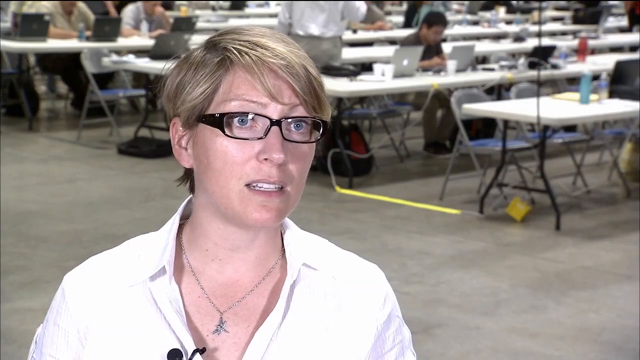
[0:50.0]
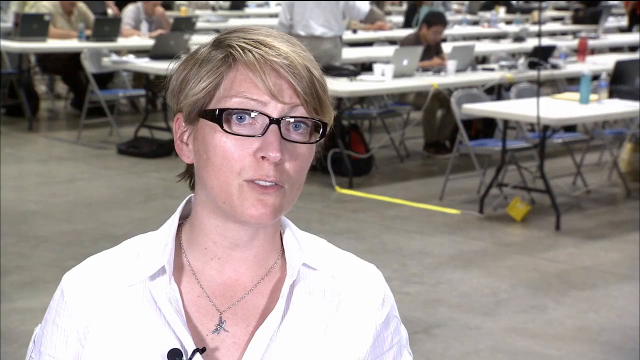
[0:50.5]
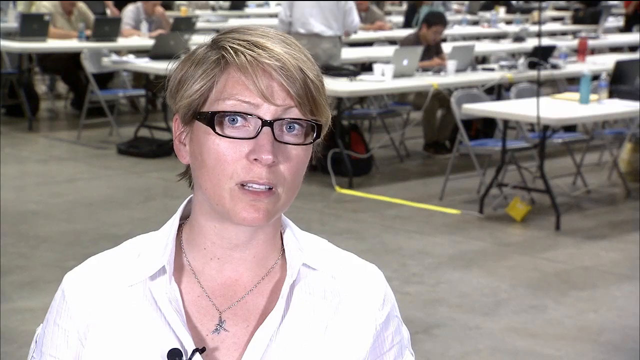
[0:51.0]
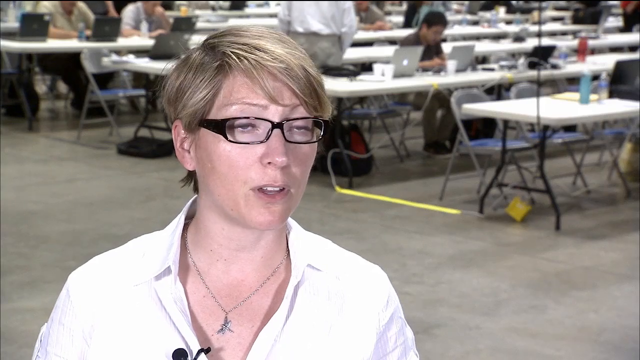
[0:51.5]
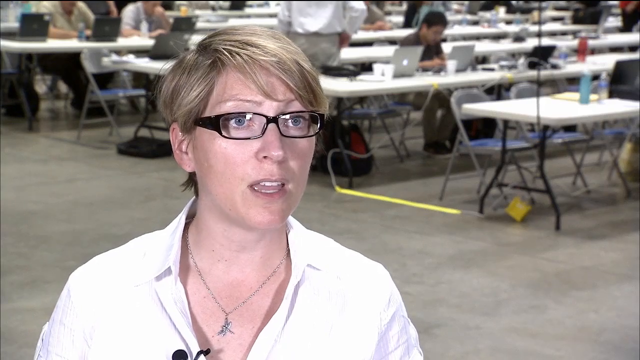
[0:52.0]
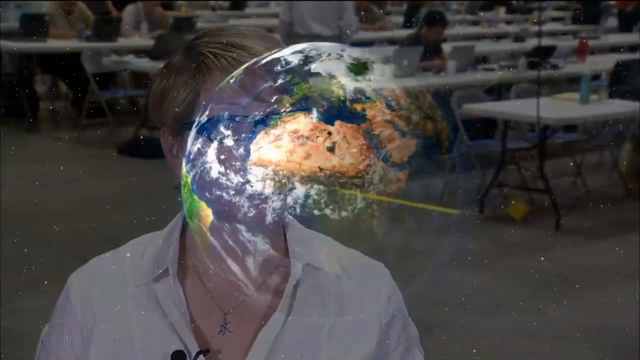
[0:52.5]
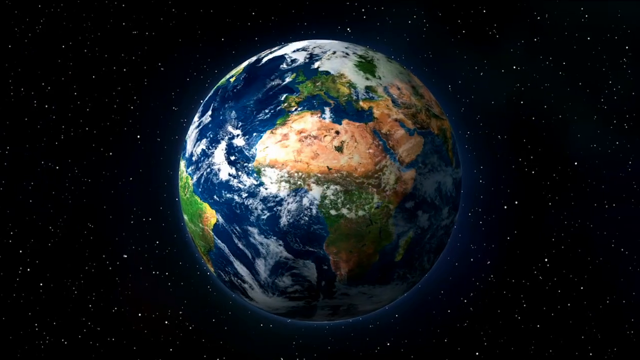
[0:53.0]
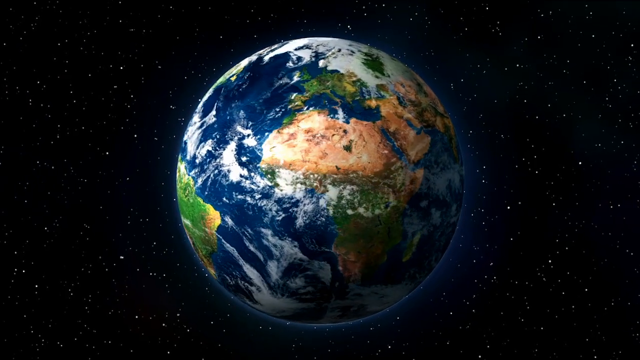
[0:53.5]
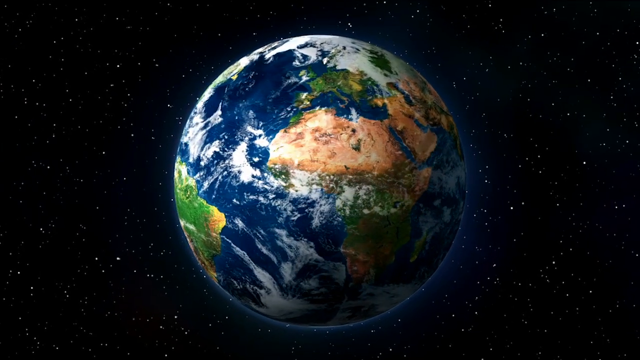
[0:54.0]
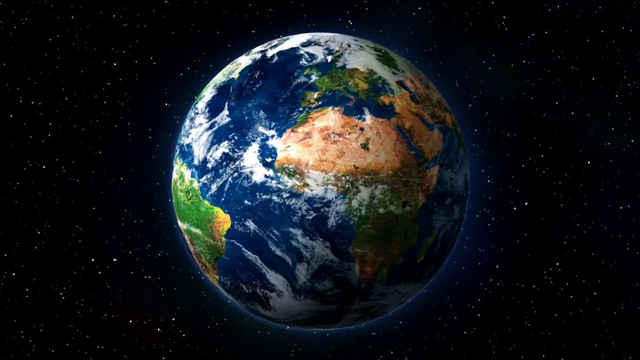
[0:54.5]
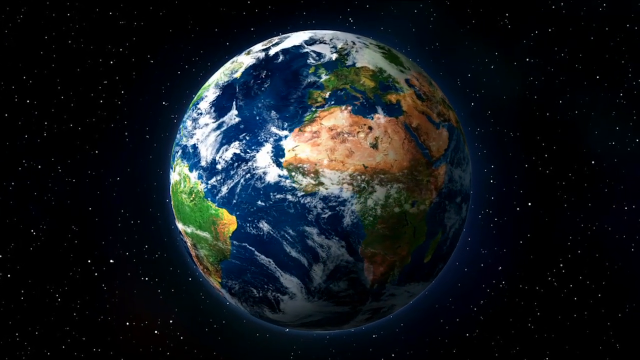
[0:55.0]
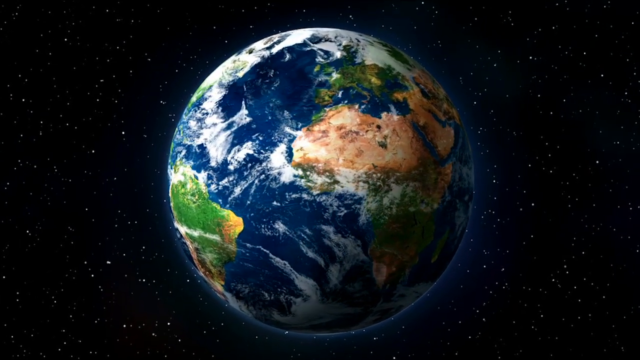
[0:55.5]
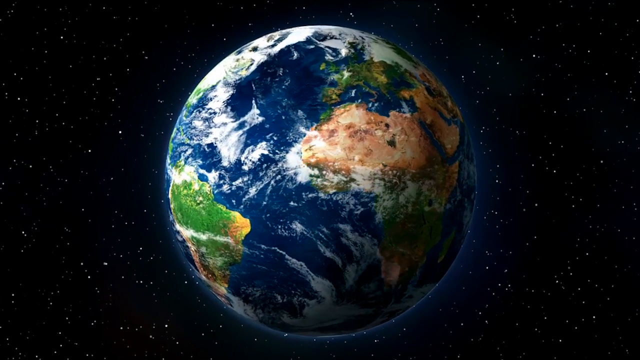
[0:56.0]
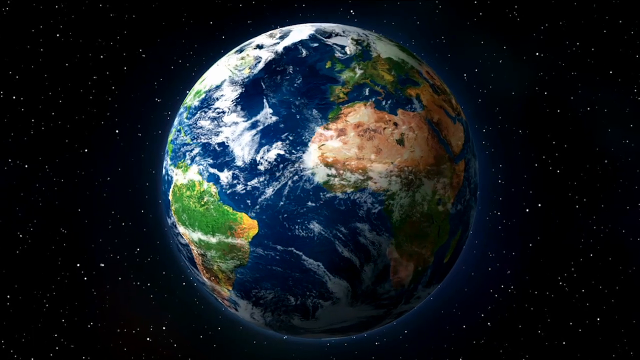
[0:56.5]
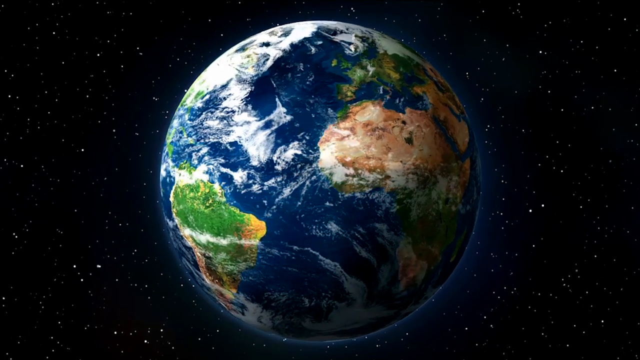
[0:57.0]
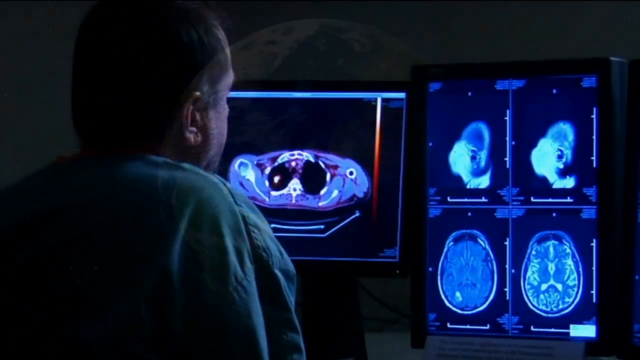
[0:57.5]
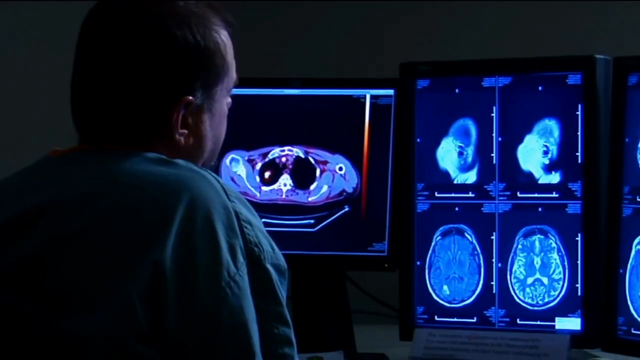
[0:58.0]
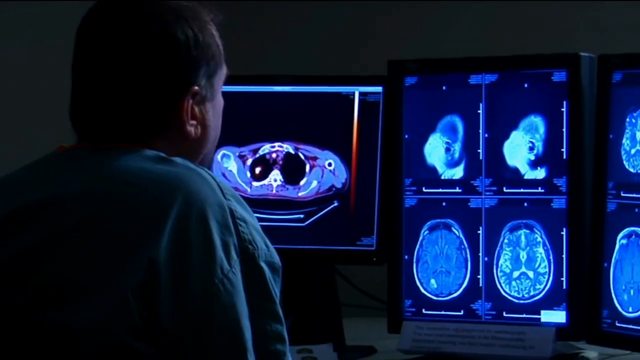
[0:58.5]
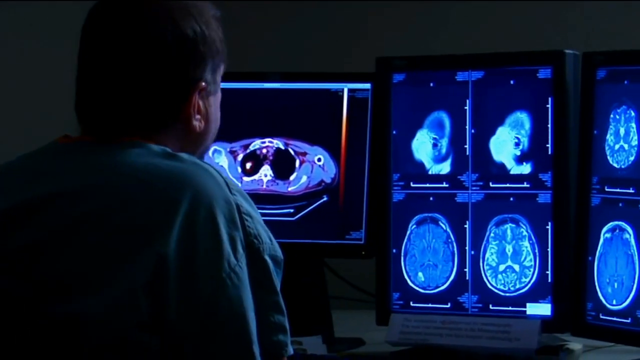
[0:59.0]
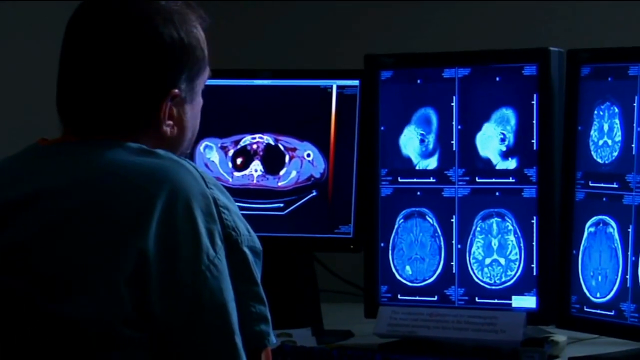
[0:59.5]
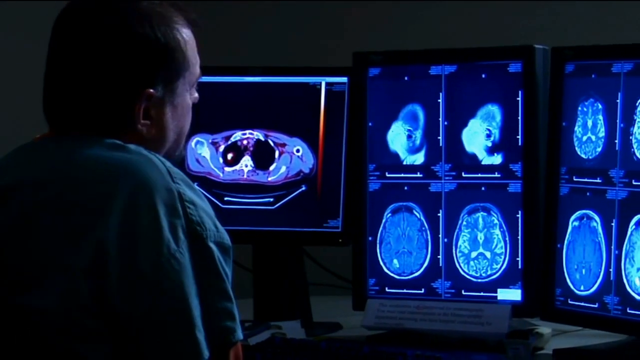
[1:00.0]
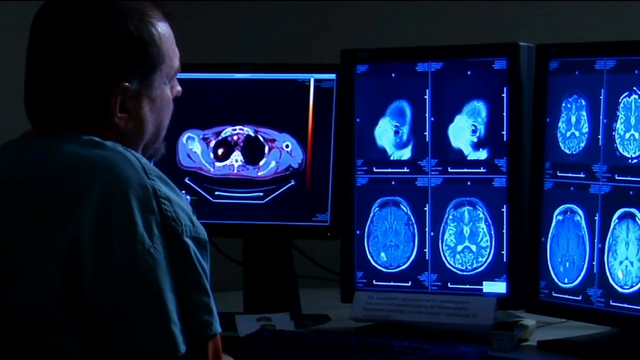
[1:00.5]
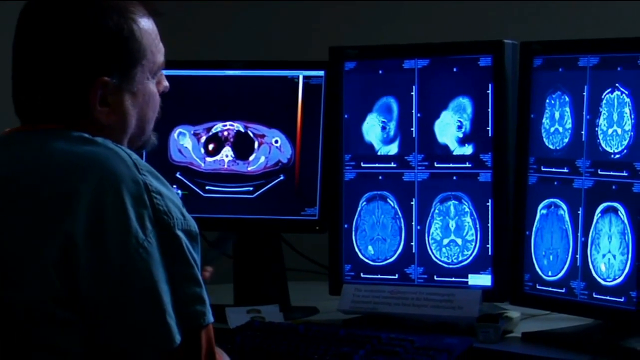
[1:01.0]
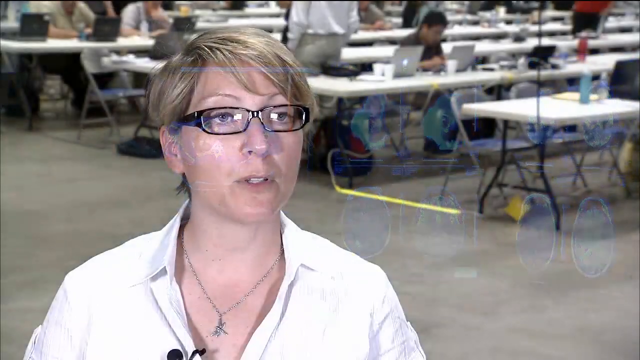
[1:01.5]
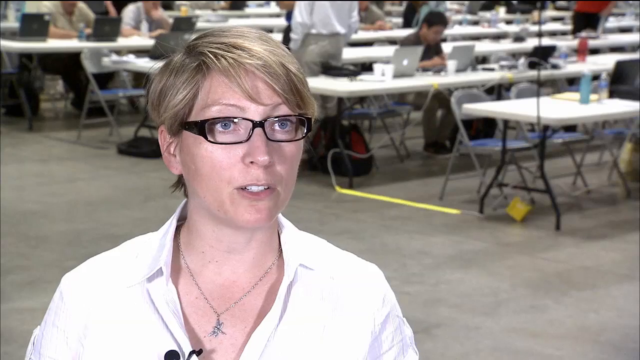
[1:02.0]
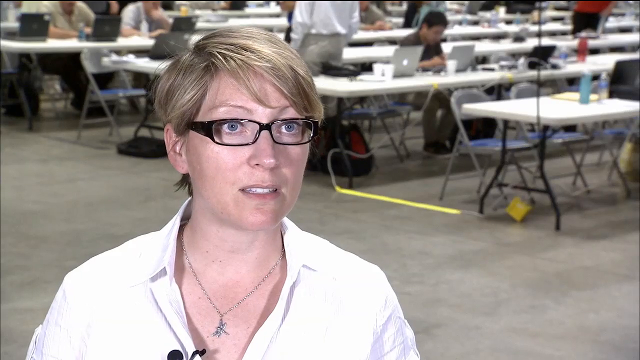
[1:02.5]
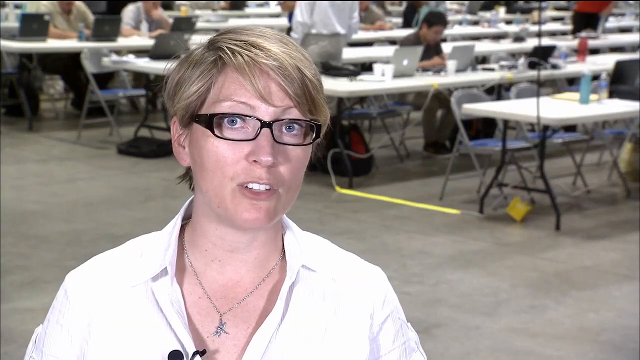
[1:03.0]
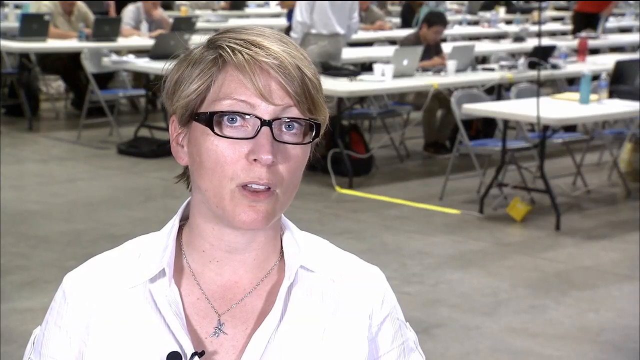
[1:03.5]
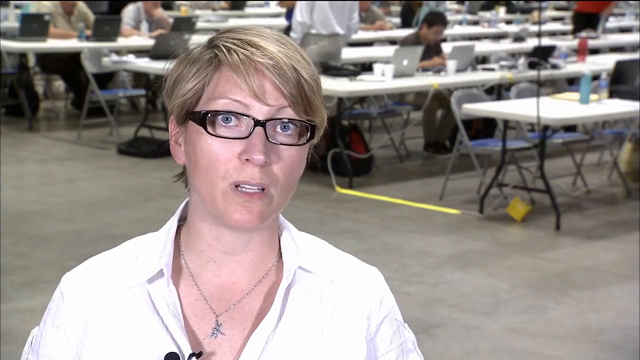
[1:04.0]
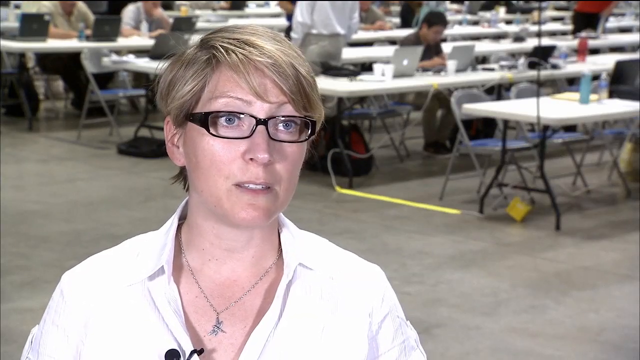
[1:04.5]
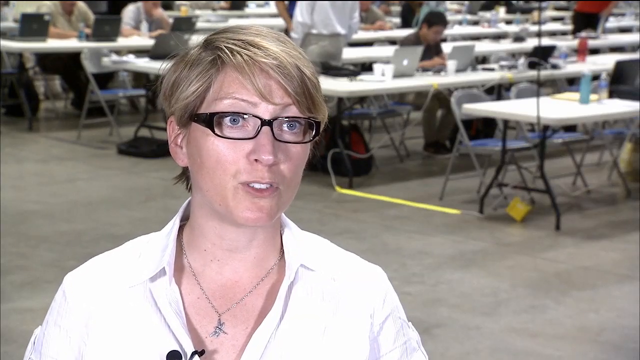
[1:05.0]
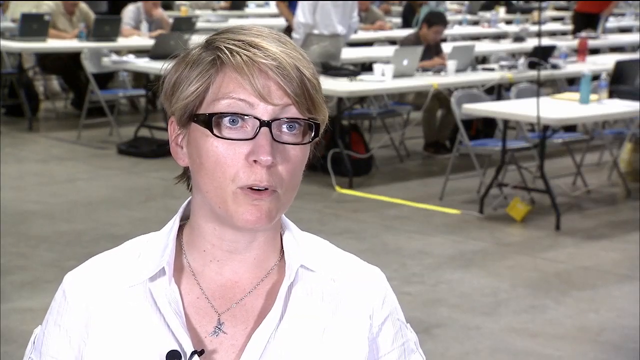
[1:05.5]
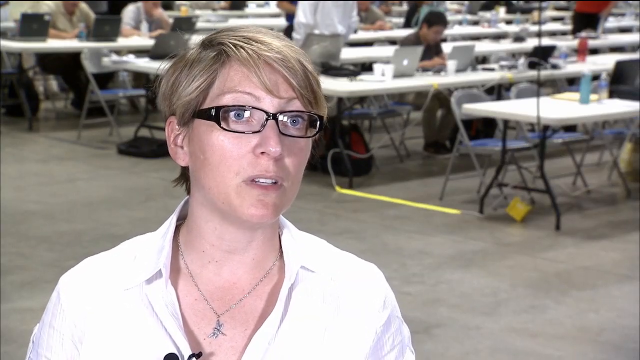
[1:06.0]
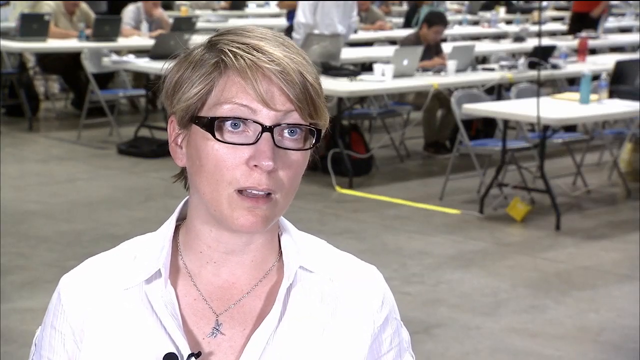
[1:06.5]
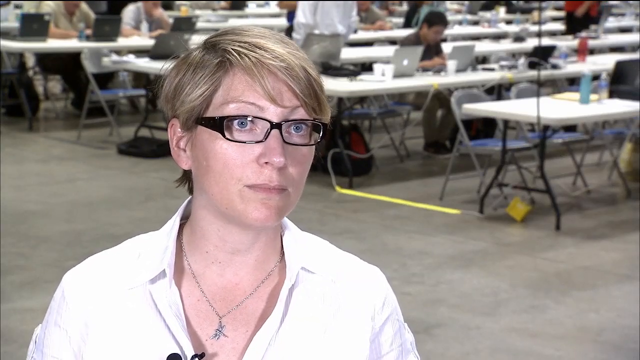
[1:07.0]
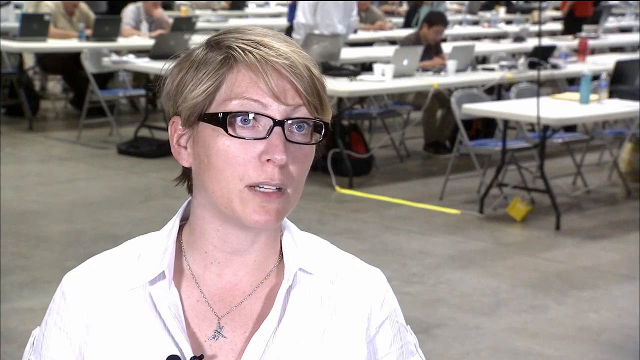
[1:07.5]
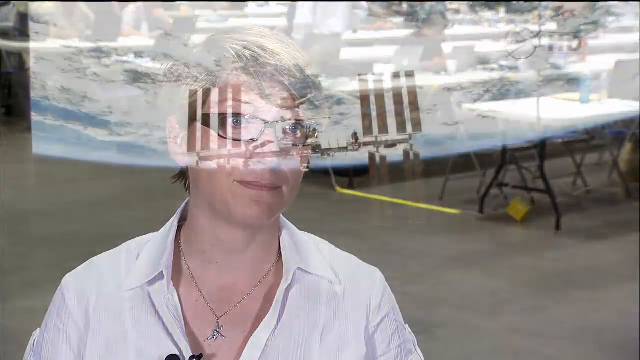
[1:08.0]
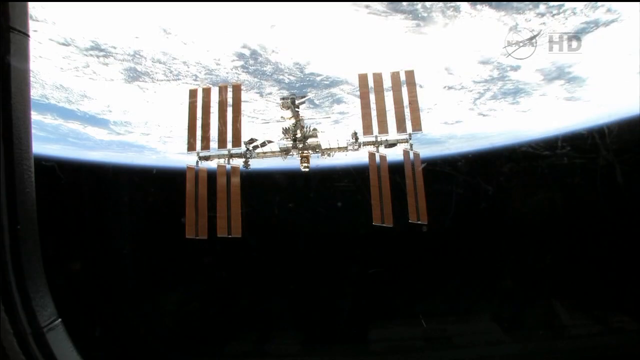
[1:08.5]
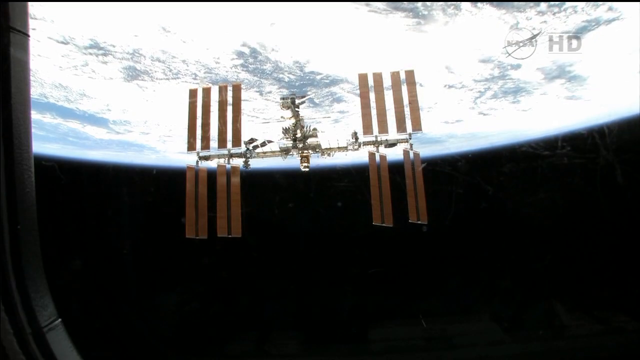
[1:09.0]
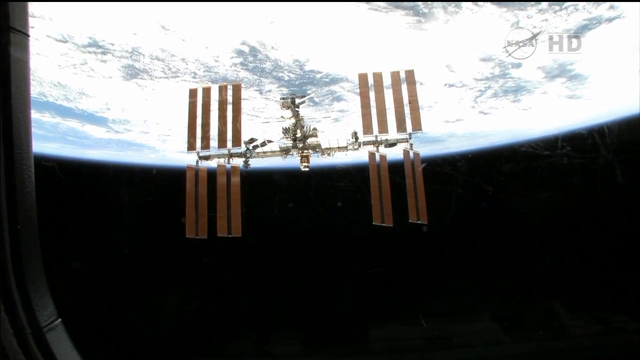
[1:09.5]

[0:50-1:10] A woman with short blonde hair and thick black-rimmed glasses speaks directly to the camera. She wears a white collared shirt that is buttoned up except for the top two or three buttons, and a chain with a charm on it is visible. Behind her is a large room with many white tables set up in rows, surrounded by gray fold-up chairs. A few laptop computers are on a couple of the tables, and a couple of people are sitting at some of these laptops. A digital image of the Earth in outer space follows; the Earth is blue and spinning, with the countries shown in green. The scene then cuts to an X-ray room, where a man with black hair in a blue shirt is seen only from behind, facing screens that display X-ray images.